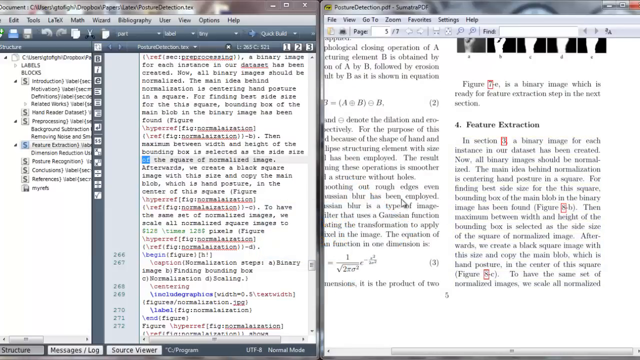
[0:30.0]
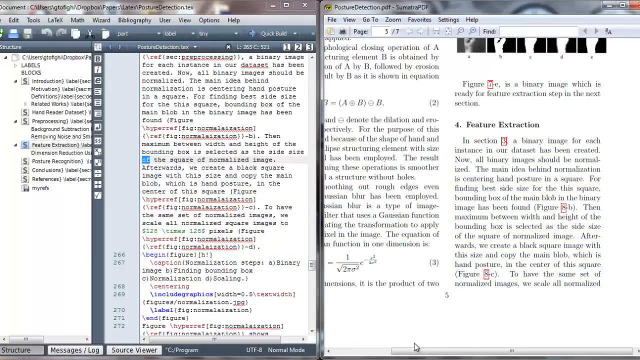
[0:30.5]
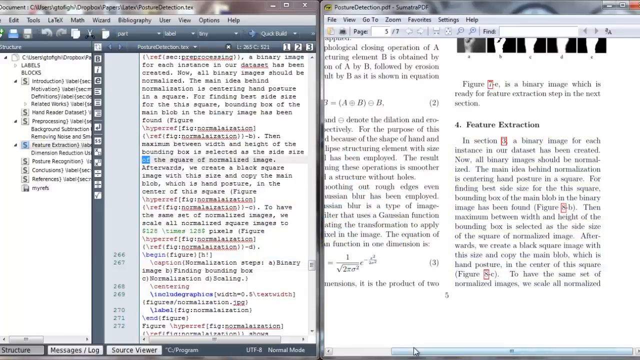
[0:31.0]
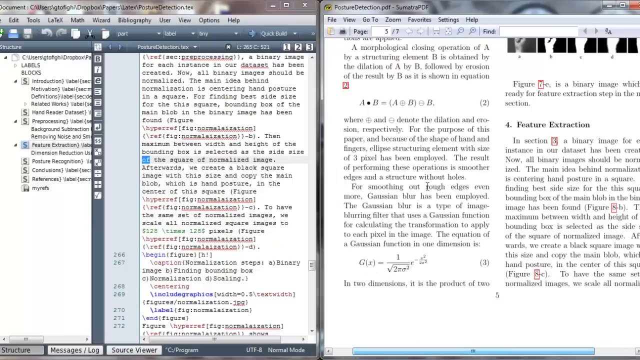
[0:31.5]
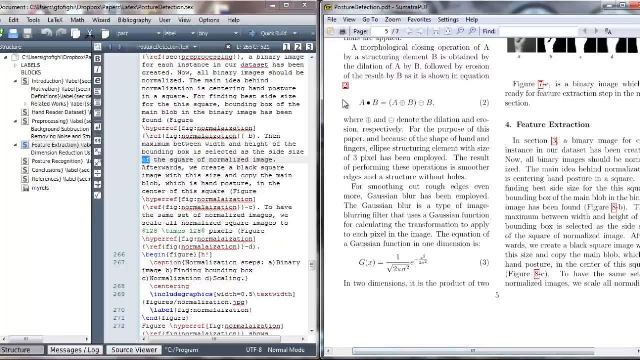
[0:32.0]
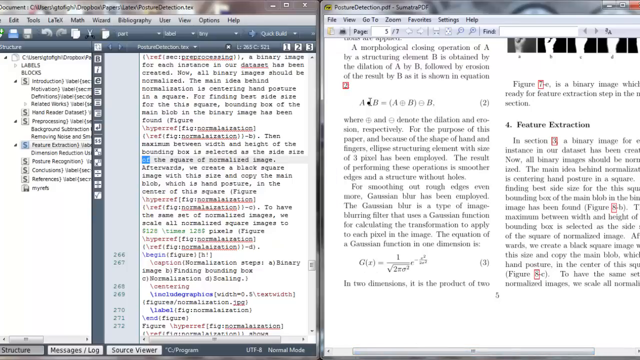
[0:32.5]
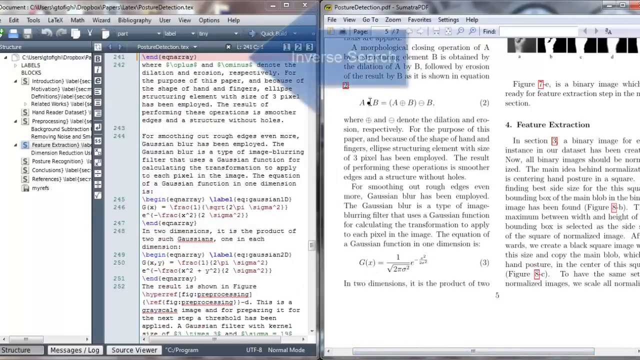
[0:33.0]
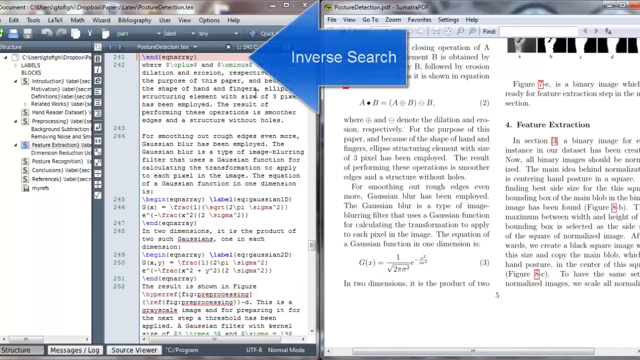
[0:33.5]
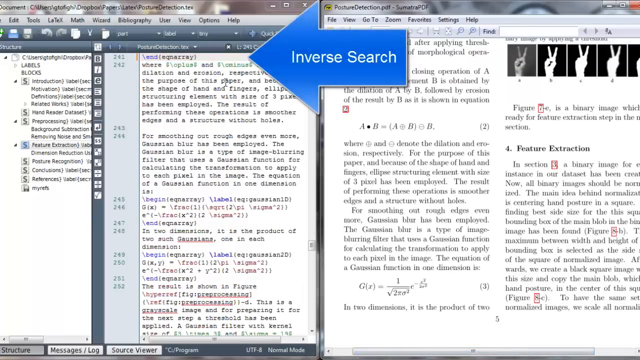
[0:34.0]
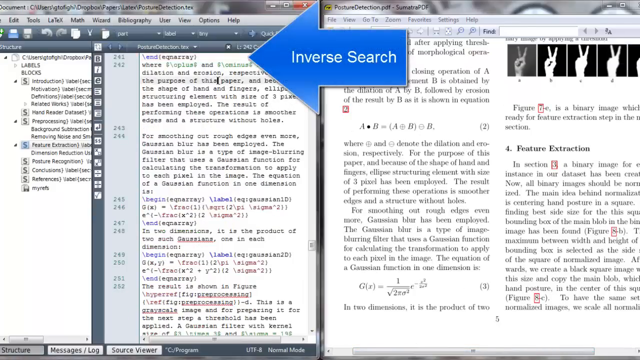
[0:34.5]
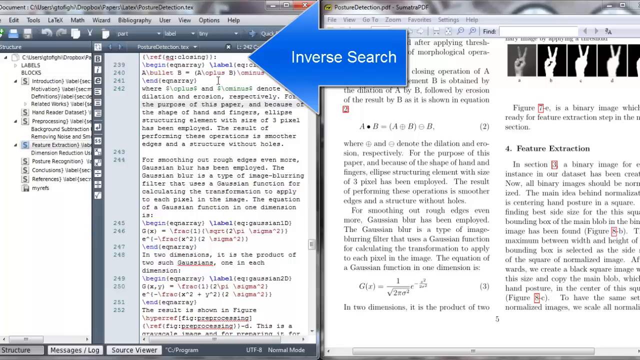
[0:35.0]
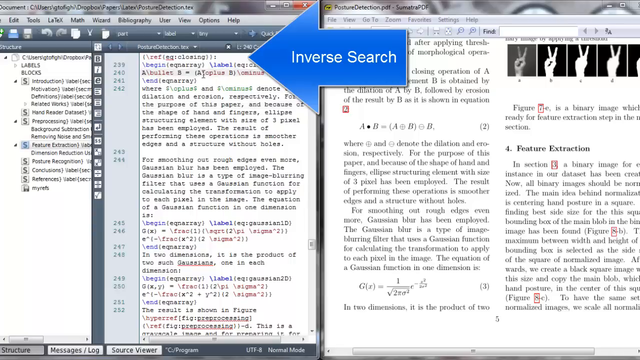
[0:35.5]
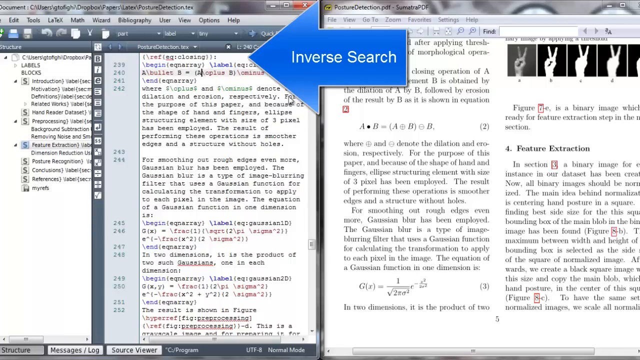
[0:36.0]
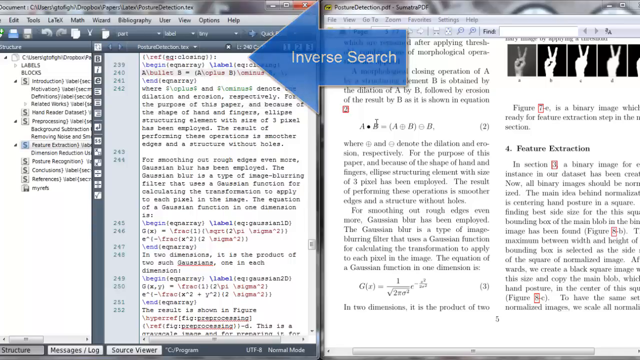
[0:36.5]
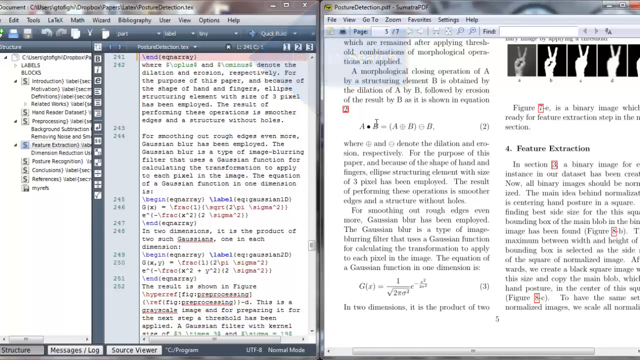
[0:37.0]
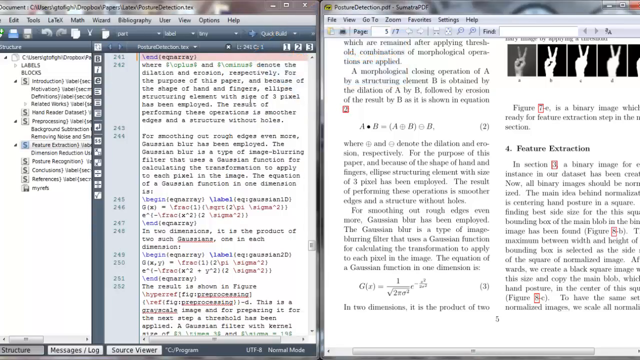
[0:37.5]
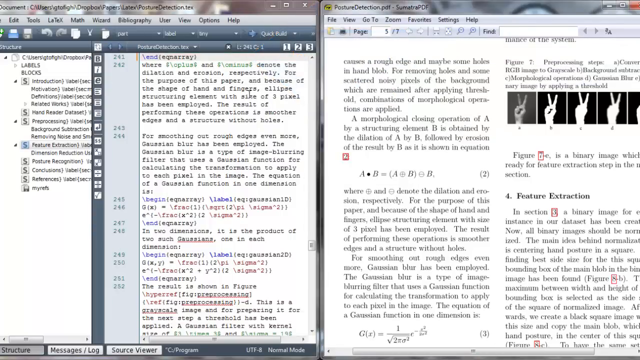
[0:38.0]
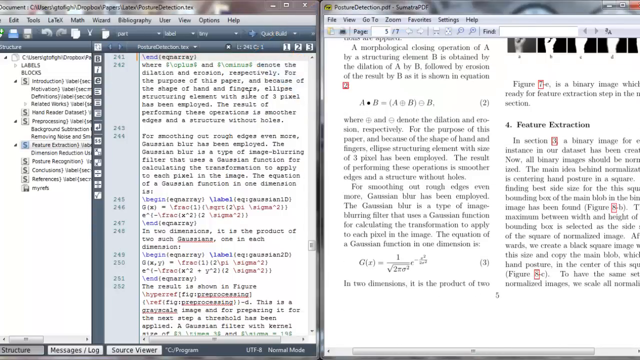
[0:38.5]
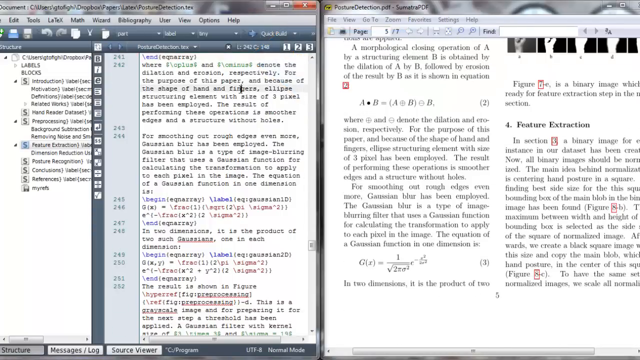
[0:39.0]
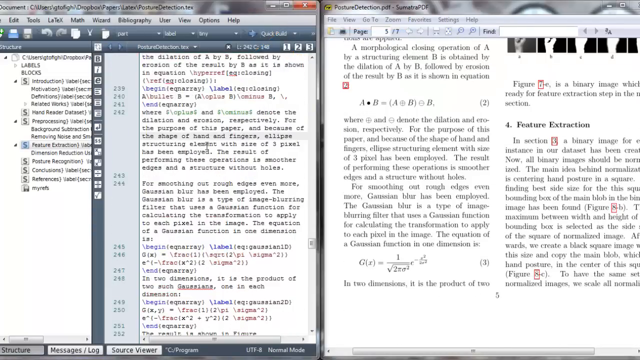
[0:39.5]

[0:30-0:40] He uses more of the search functions. There also appears to be an inverse search, using what is inside the PDF document to find something elsewhere; the arrow now points in the opposite direction from the one it pointed in originally. Technical terms are visible, such as a Gaussian function for calculating a transformation and centering hand posture in a square, and hand signals appear in the document.